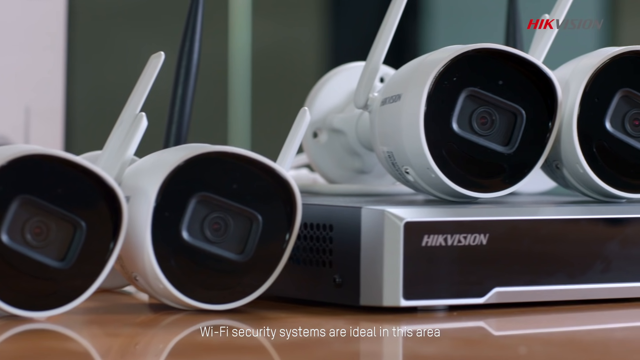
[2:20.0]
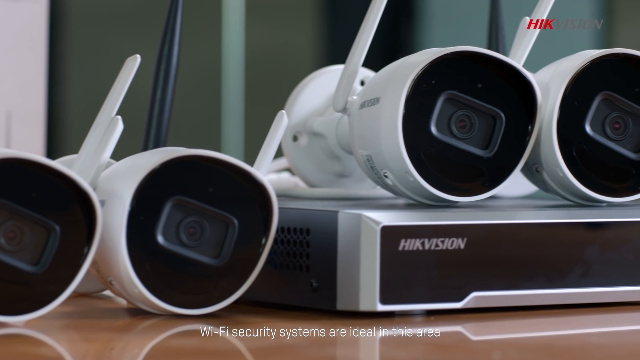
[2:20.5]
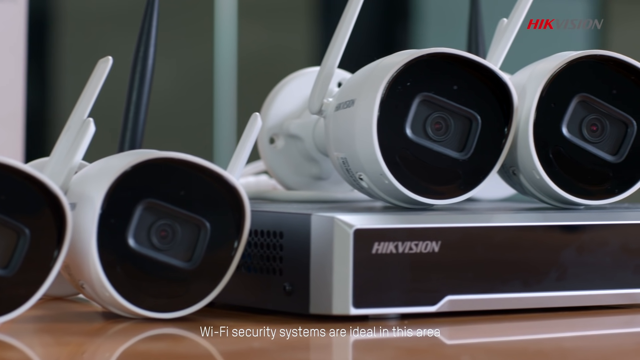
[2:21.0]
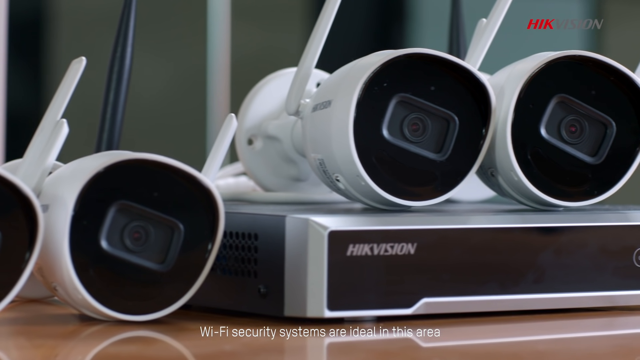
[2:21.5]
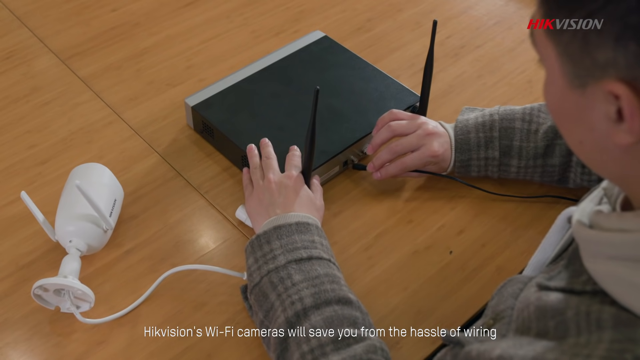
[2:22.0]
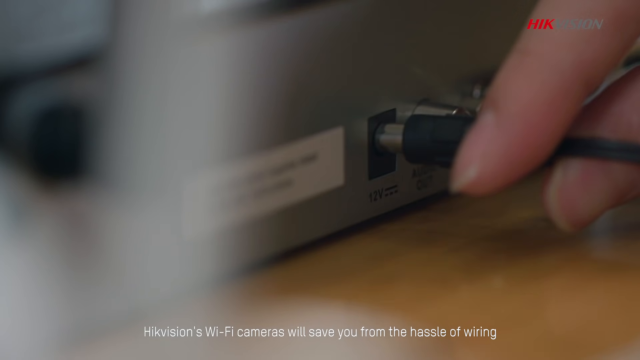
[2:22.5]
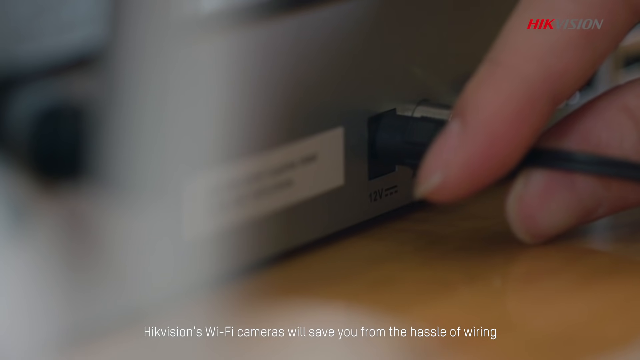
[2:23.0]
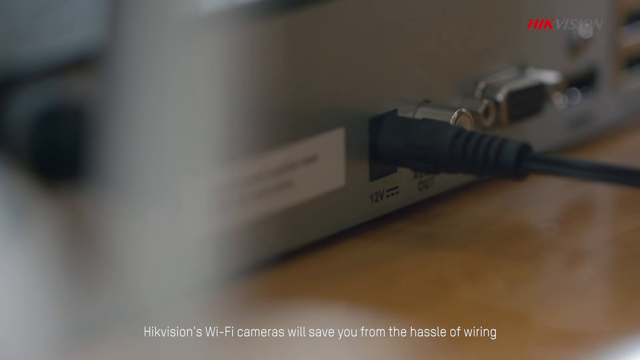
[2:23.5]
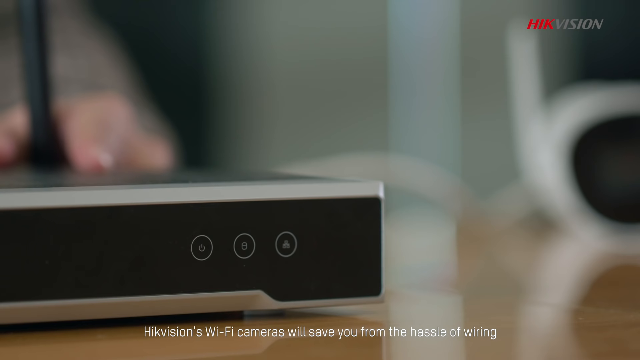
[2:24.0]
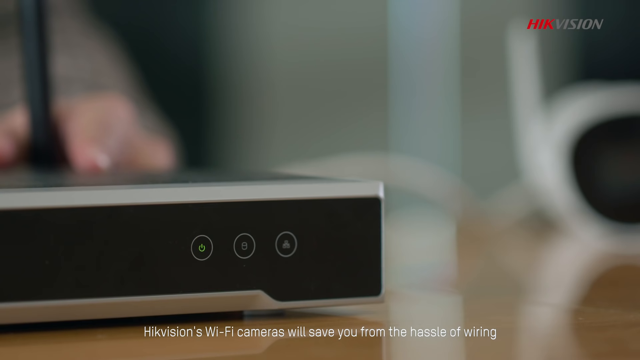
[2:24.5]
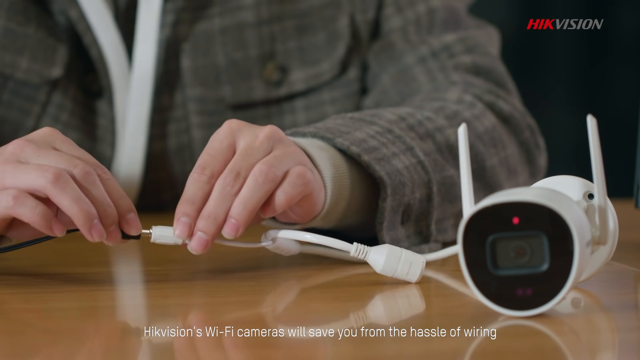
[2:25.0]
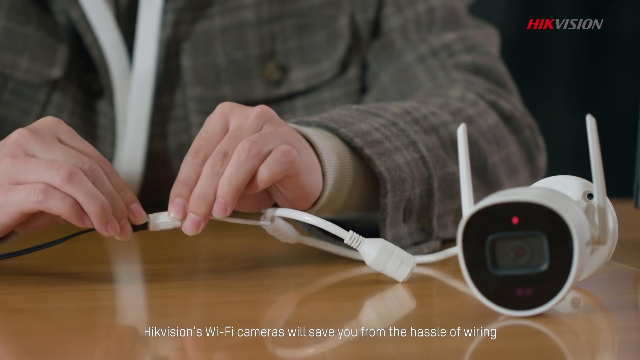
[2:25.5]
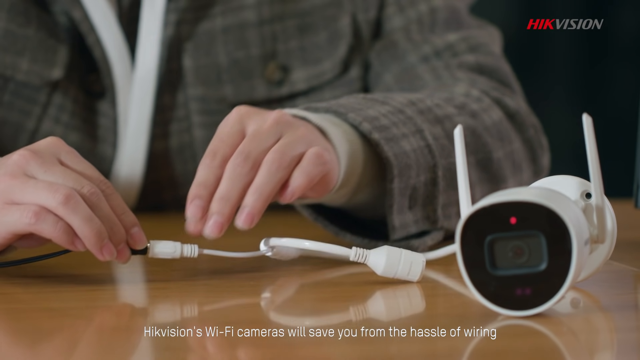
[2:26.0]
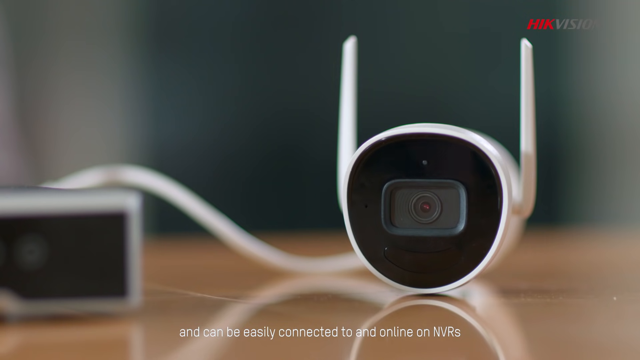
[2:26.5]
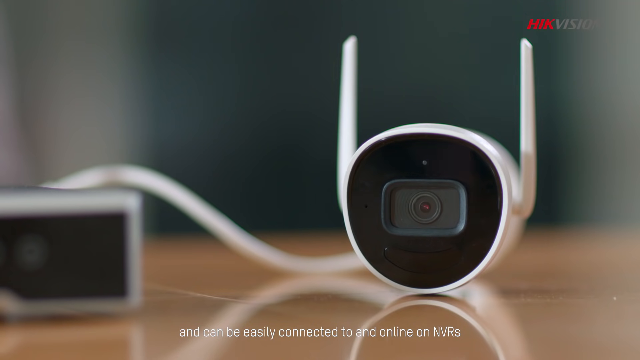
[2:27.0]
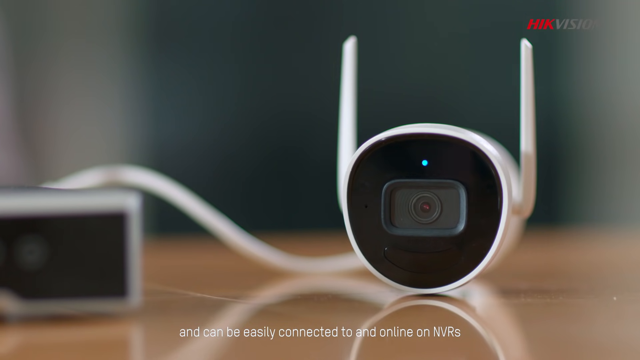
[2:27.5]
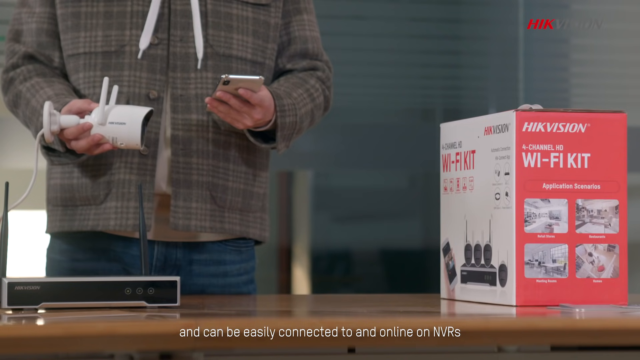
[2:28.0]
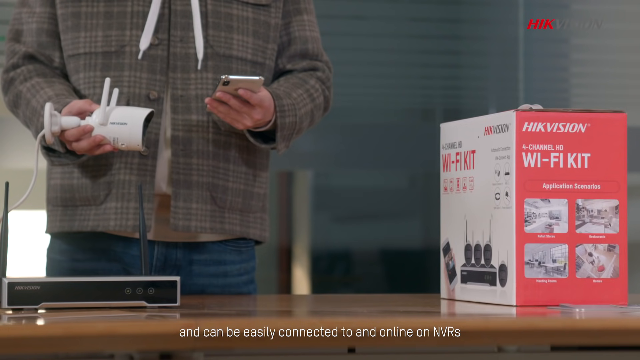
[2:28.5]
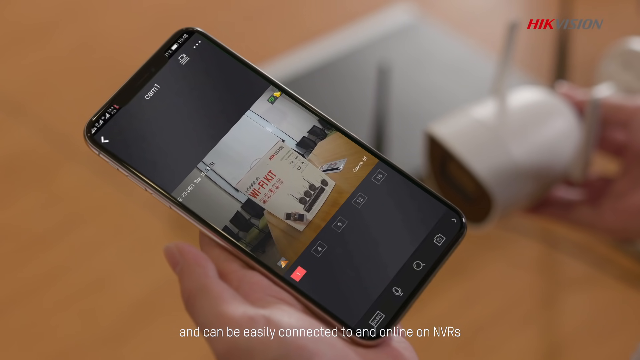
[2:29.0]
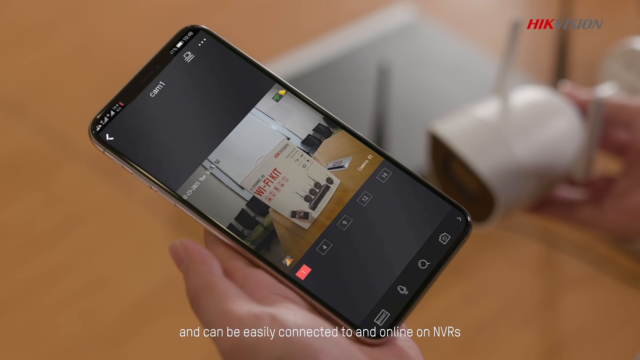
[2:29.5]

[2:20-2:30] A close-up shows the system as the man plugs a few wires into the DVR. The video feeds work, and a light that was red before is now flashing green. A green power button on the DVR receiver is on. His phone then shows clear images of the table with the security system on it while he looks at it.